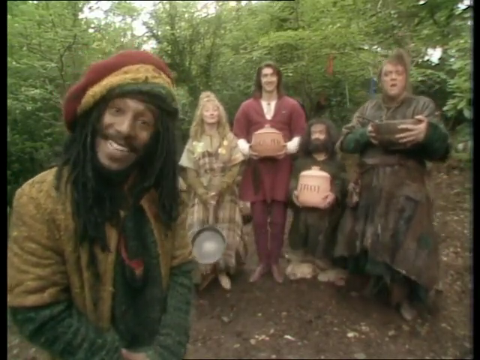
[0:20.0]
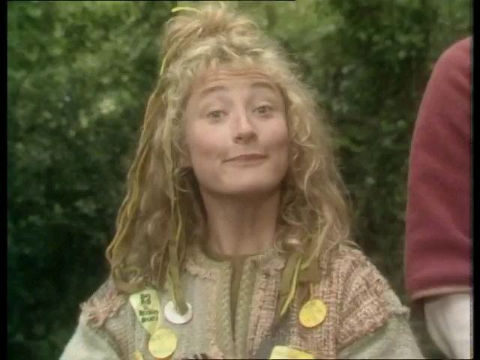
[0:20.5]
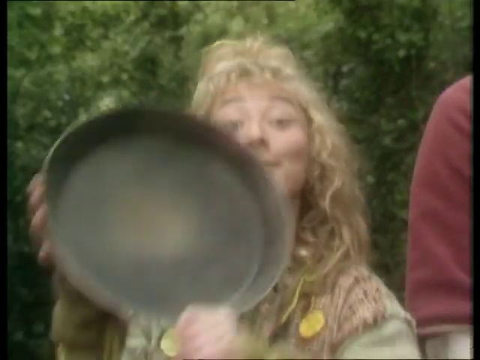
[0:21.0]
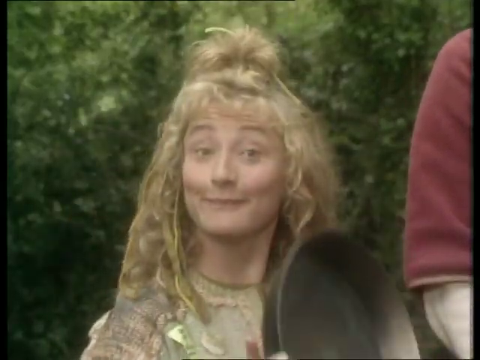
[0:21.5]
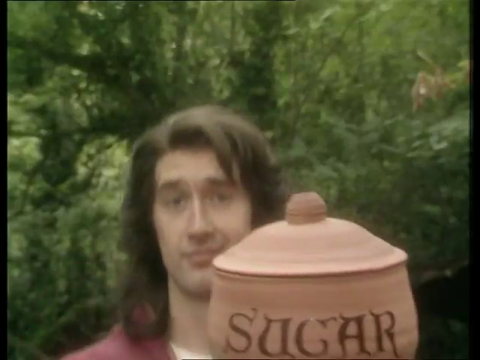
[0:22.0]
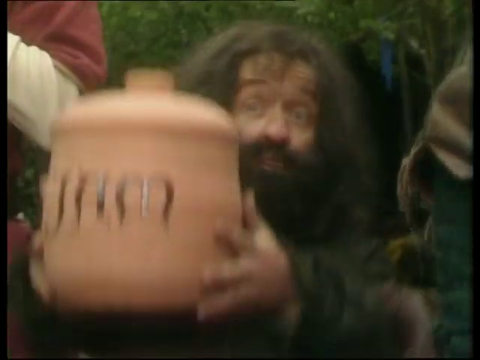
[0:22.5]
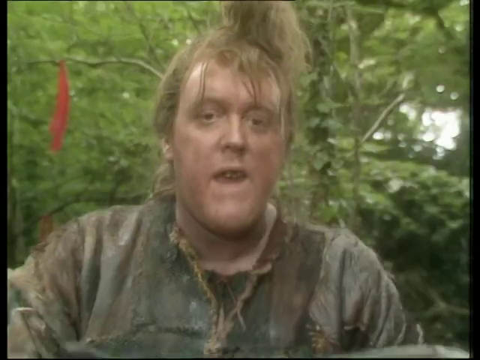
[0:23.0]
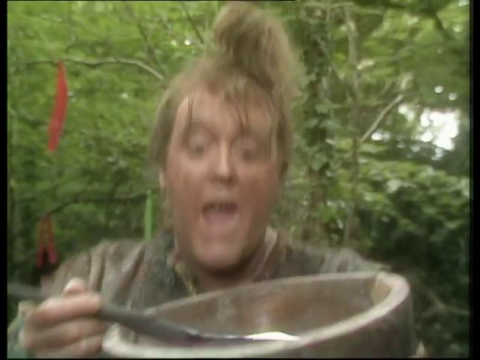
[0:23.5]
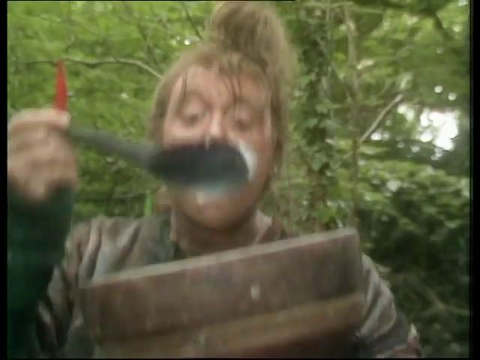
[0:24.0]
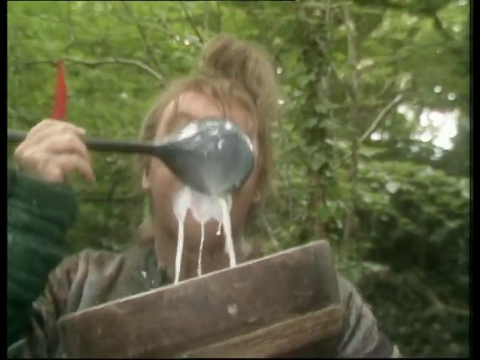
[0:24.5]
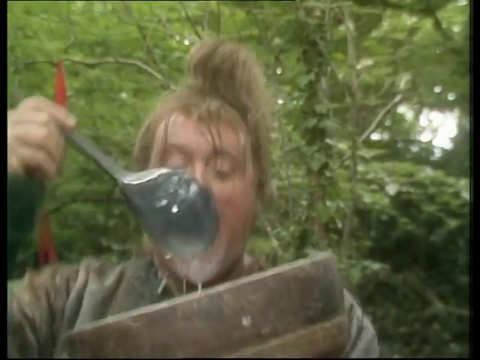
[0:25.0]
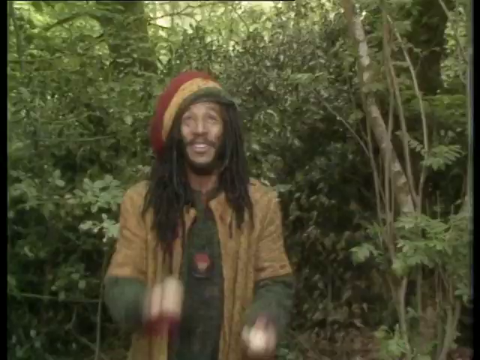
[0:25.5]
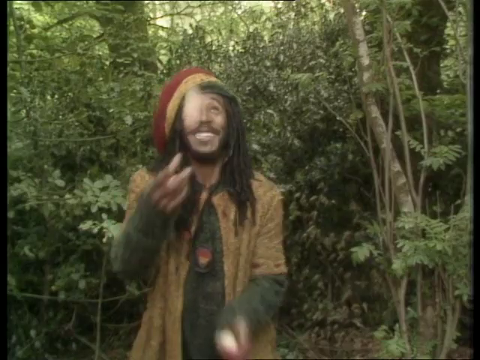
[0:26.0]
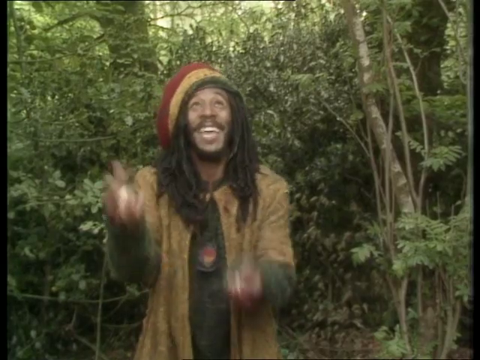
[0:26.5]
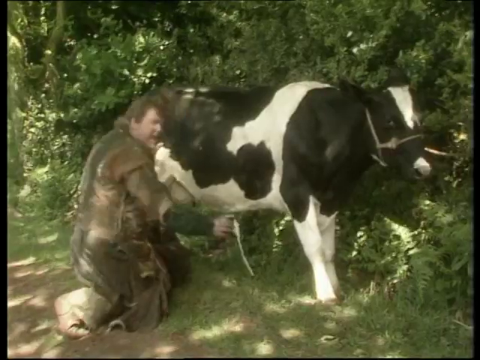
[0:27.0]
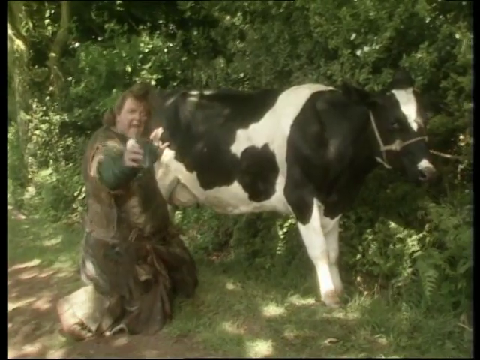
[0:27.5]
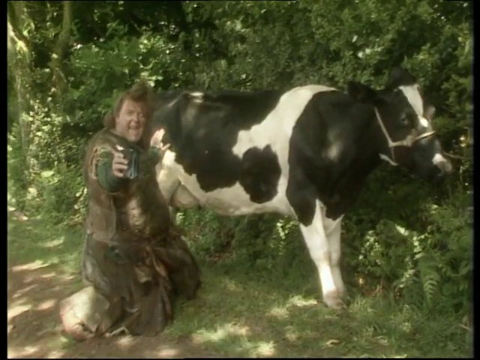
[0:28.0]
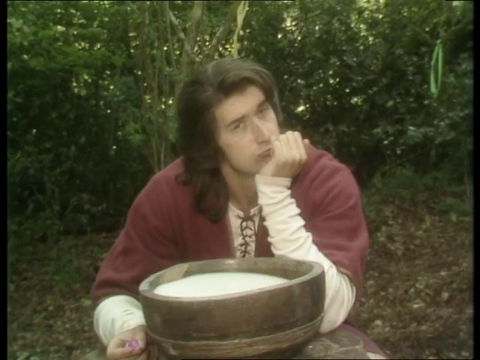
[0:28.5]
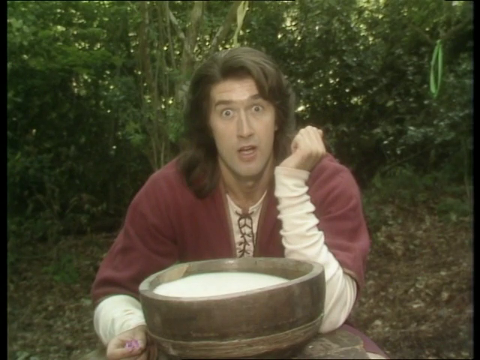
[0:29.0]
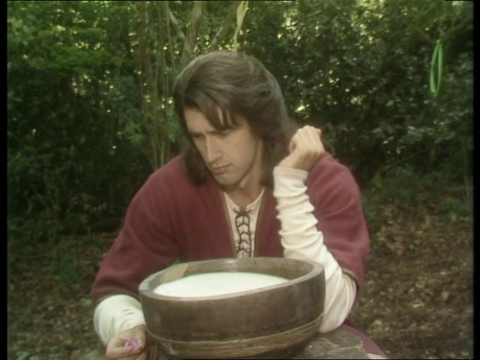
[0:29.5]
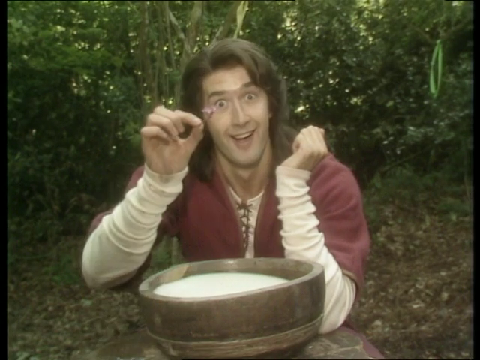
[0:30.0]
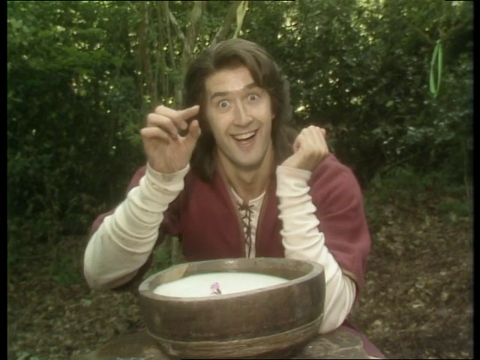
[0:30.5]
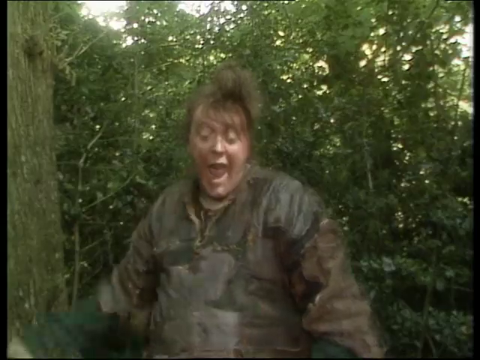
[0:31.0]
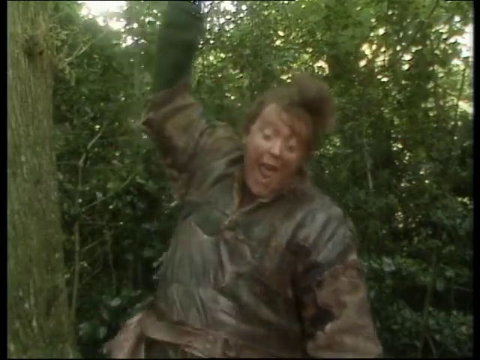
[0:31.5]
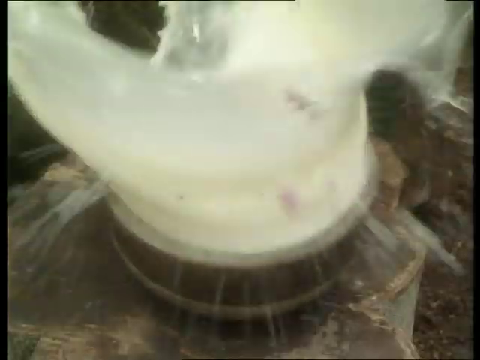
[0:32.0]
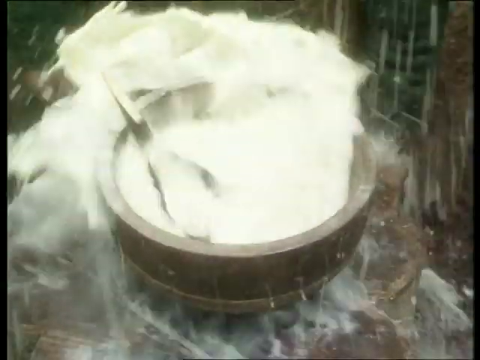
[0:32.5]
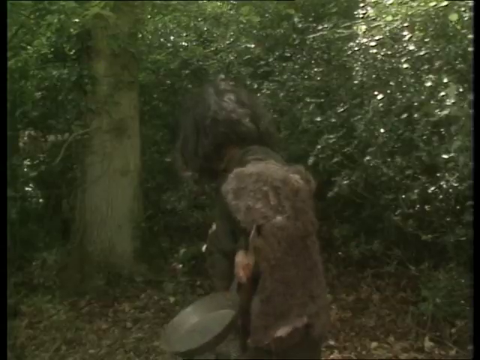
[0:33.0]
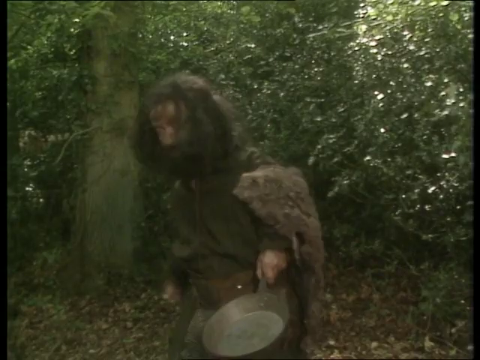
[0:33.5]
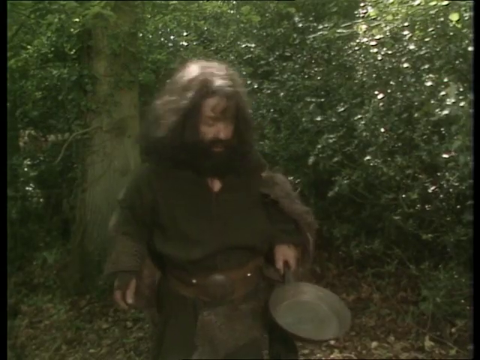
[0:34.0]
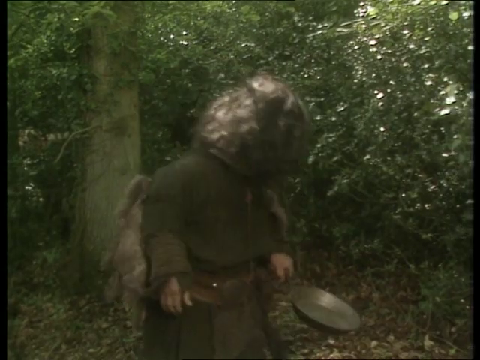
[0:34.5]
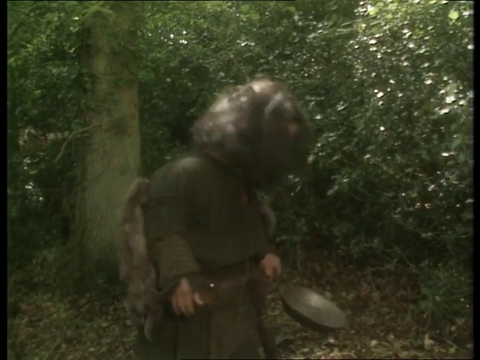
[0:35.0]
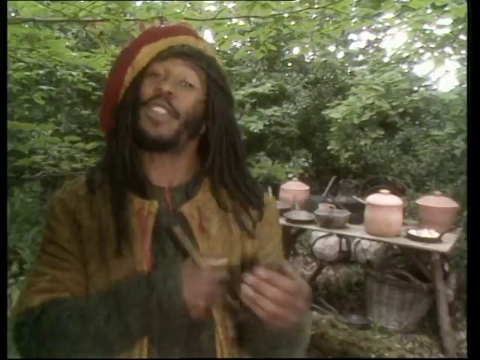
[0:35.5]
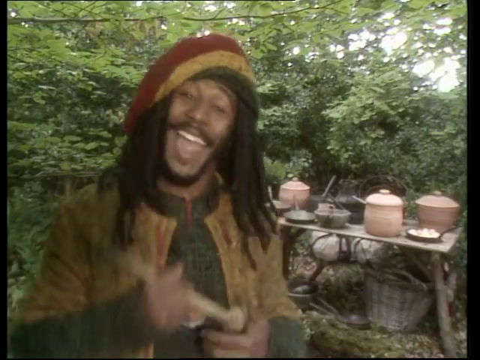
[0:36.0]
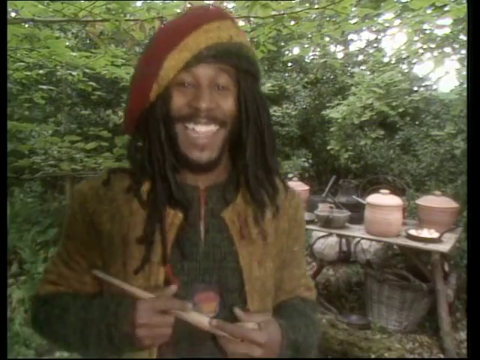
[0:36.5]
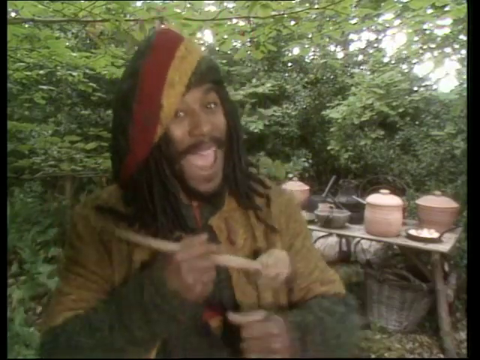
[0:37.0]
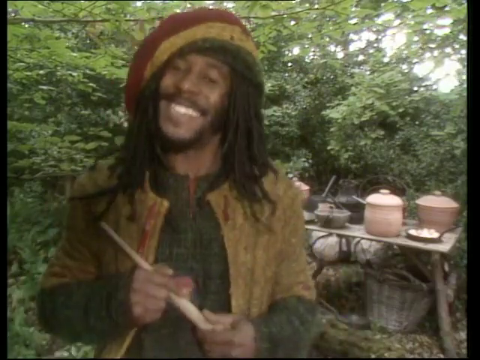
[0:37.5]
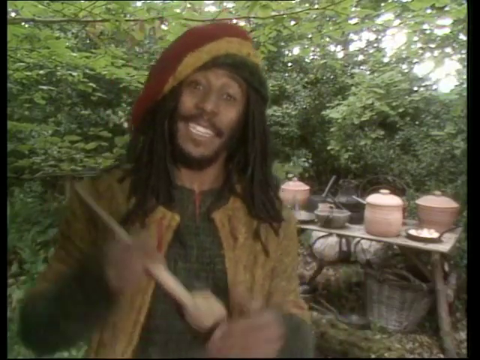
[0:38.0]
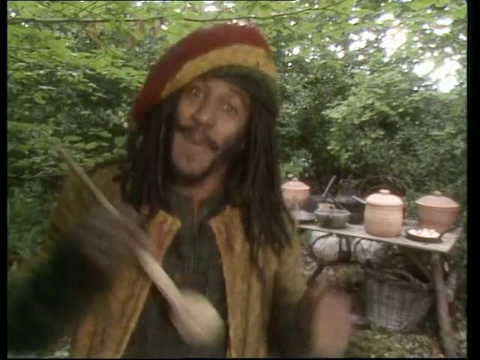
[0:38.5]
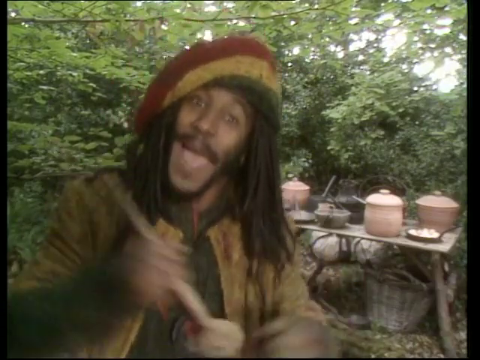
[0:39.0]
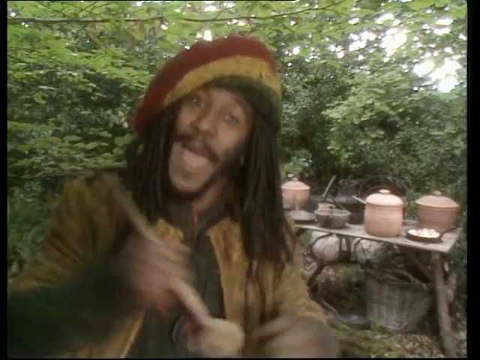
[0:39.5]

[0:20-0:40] The video cuts to shoulder-up shots of the people in the background who were squatting. First, a woman with blonde hair holds up her pan and moves it around her face as she smiles at the camera and bounces down. Next, a man with long brown hair and a red tunic holds up some sort of clay-like pot as he bounces down. The little person also has a type of clay pot; he holds it up to his ear and moves his head to the other side of the pot as he smiles, his arms kind of obscuring his smile. Another woman, heavier set, has scraggly brown hair and looks a bit dirty; her brown medieval clothing is kind of torn and tattered. She holds up some sort of bowl, with a spoon in her right hand, bounces up and down and ladles some sort of milk into her mouth with the spoon, smiling. The African American man with dreadlocks juggles three eggs while smiling. The heavier-set woman is then milking a cow into a cup that she holds in her right hand; she is on her knees, and she holds the cup up to the camera with a smile. A man with long black hair and a red tunic sits looking off camera with a bowl of the milk in front of him. He looks at the camera, then down at something in his right hand, which he picks up and drops into the milk bowl; it is some sort of flour. The heavier-set woman then grabs something and spills the bowl of milk. The little person looks around himself with the pan. Finally, the African American man with dreadlocks is once again moving his shoulders and dancing, edited in a glitchy fashion, while holding a white wooden spoon in his right hand.